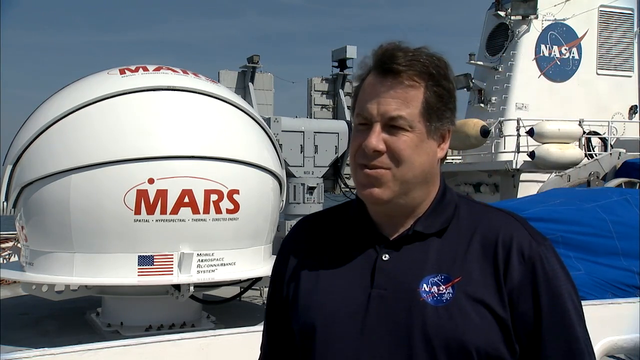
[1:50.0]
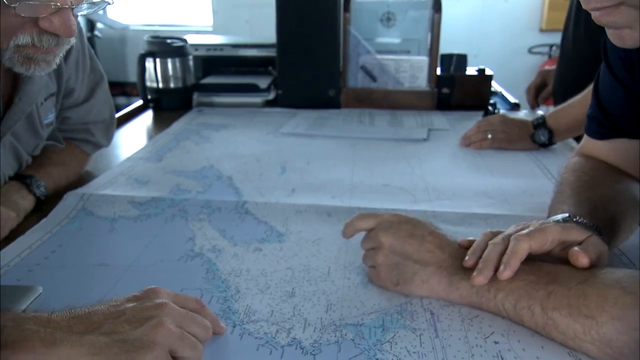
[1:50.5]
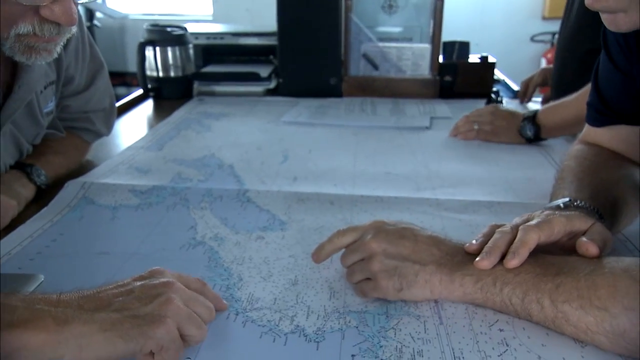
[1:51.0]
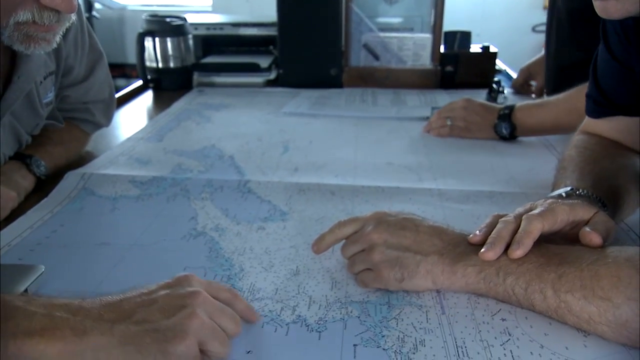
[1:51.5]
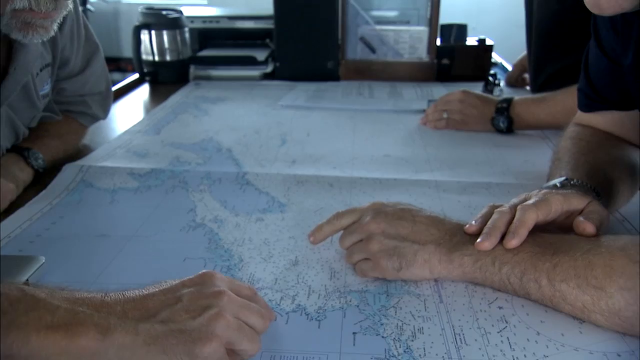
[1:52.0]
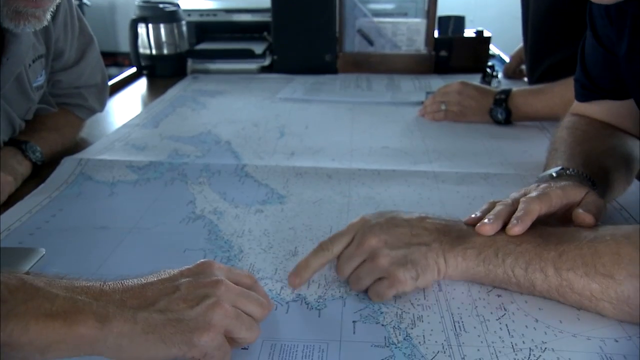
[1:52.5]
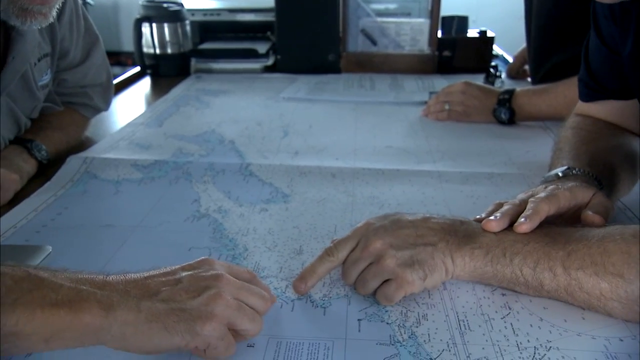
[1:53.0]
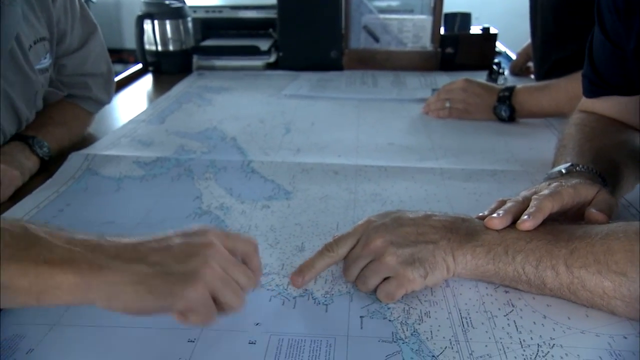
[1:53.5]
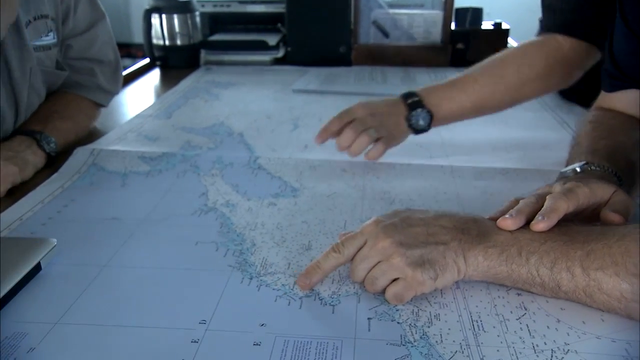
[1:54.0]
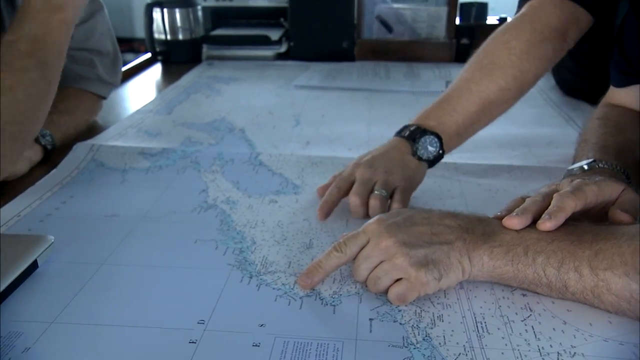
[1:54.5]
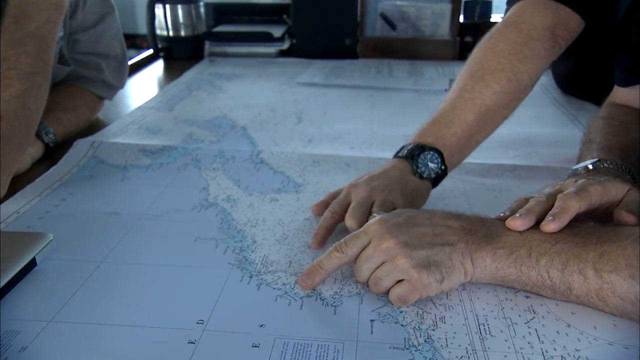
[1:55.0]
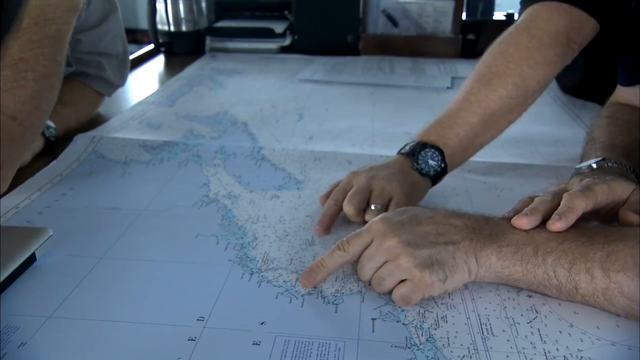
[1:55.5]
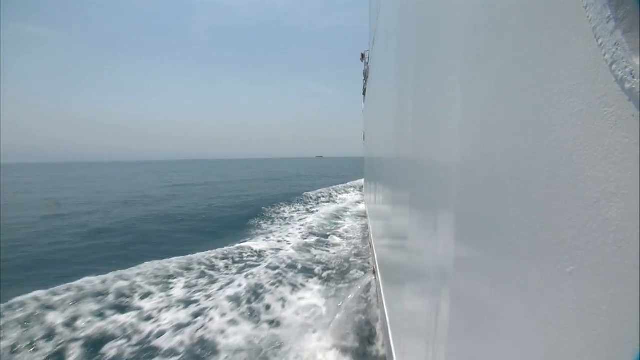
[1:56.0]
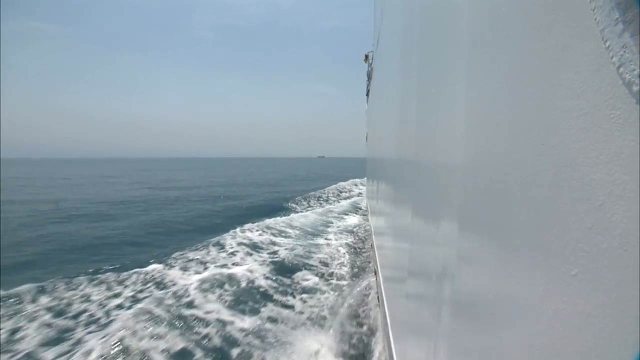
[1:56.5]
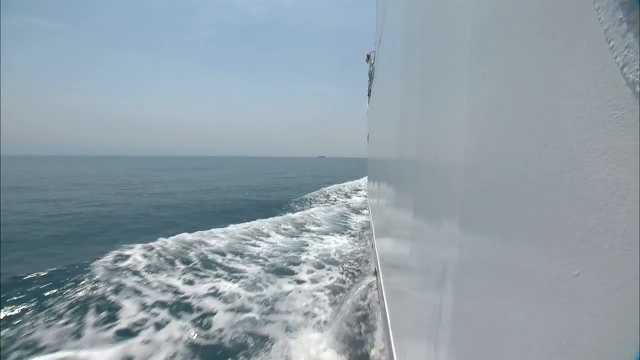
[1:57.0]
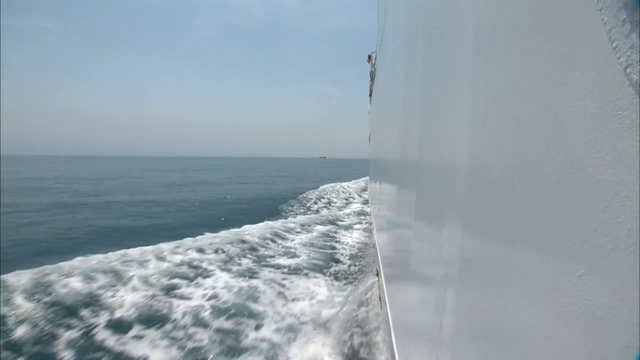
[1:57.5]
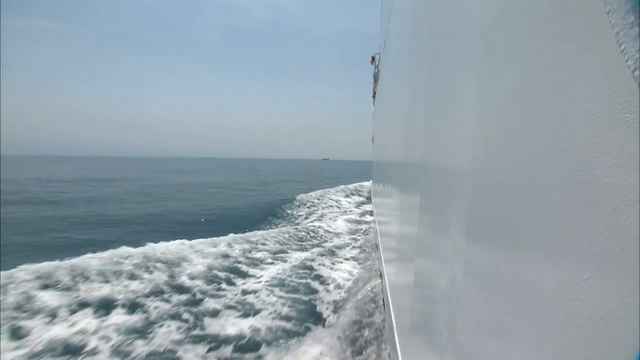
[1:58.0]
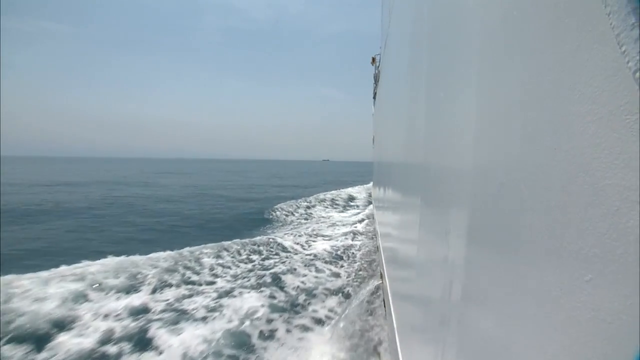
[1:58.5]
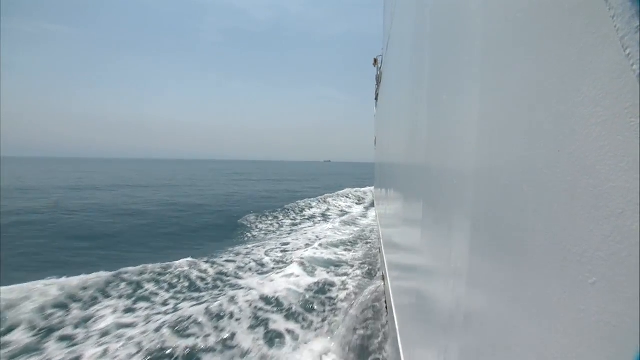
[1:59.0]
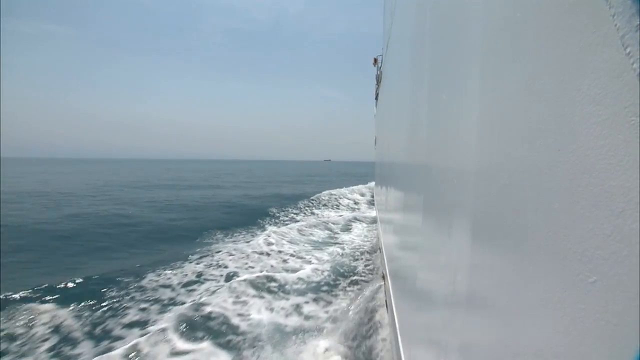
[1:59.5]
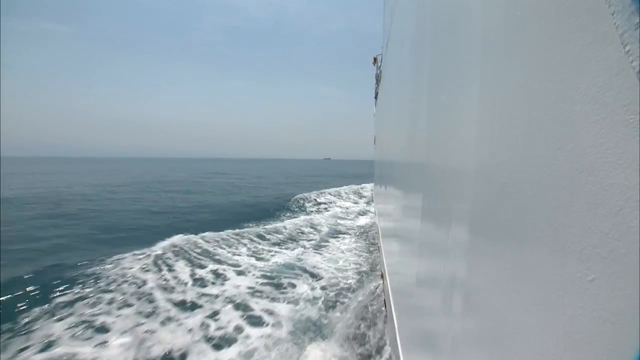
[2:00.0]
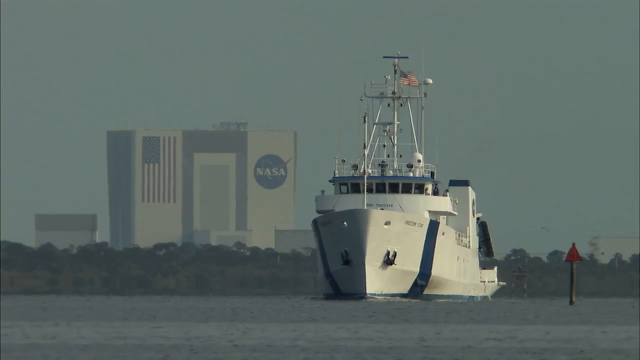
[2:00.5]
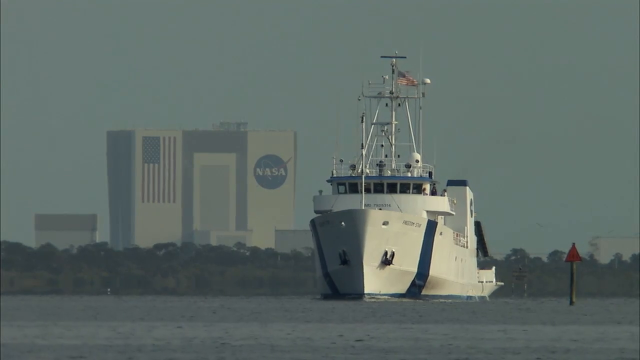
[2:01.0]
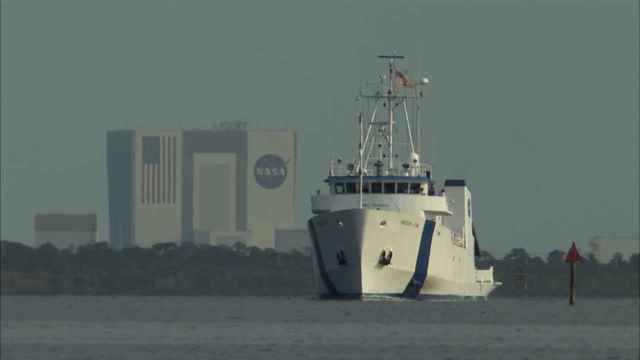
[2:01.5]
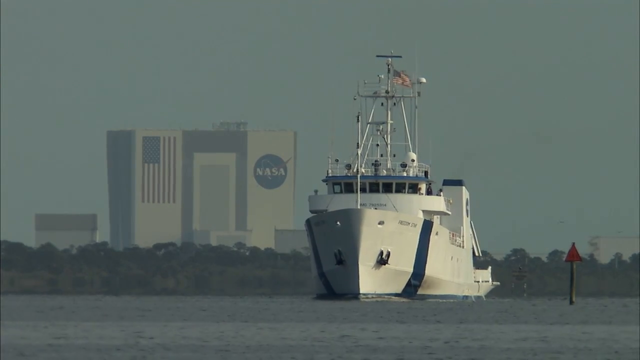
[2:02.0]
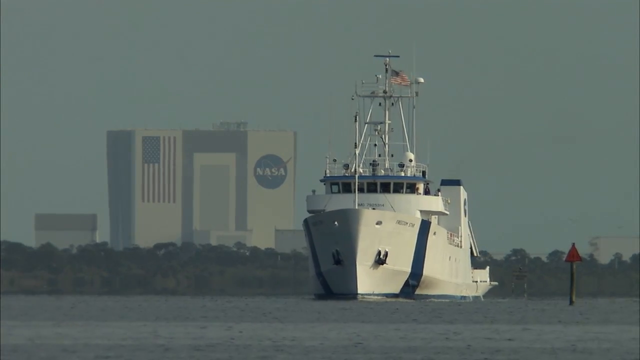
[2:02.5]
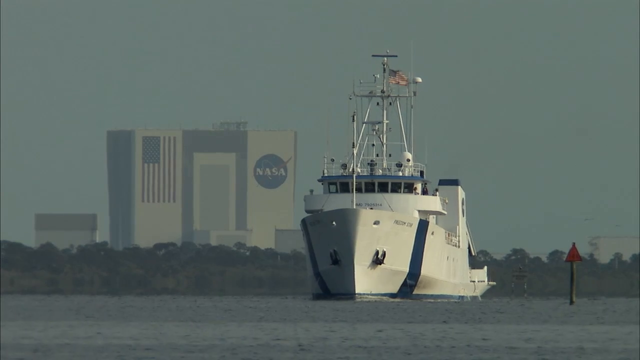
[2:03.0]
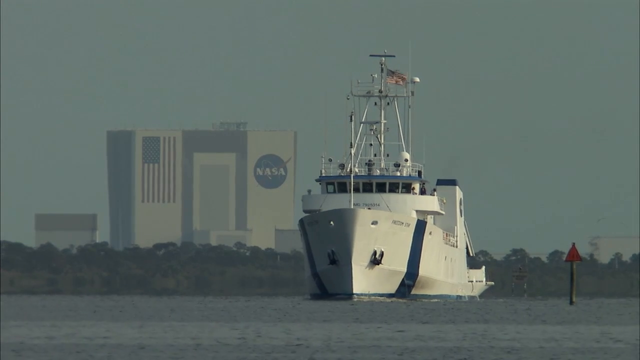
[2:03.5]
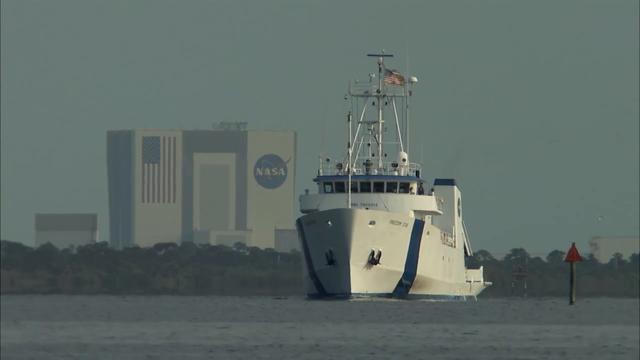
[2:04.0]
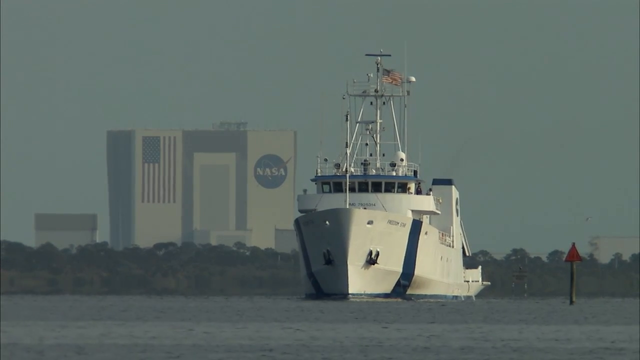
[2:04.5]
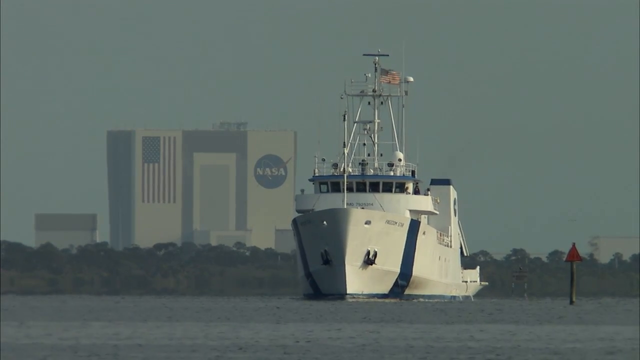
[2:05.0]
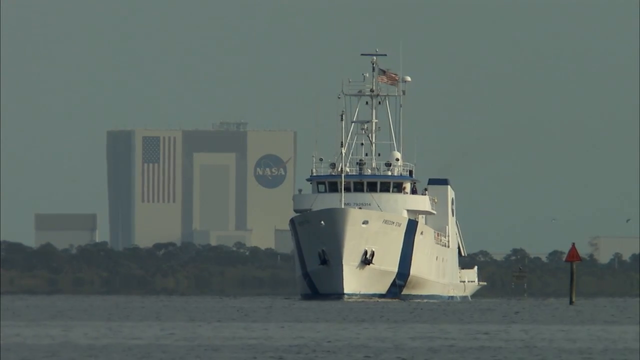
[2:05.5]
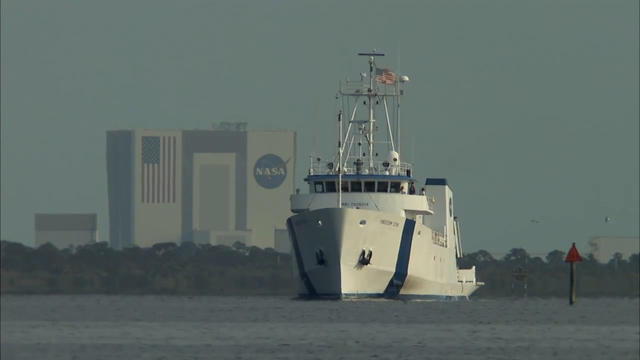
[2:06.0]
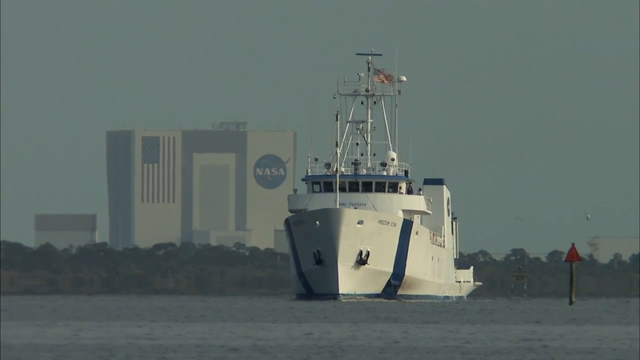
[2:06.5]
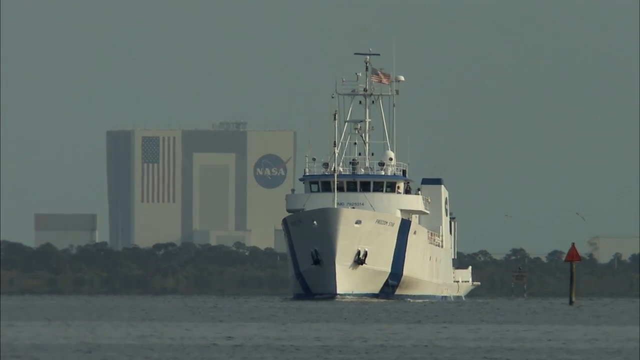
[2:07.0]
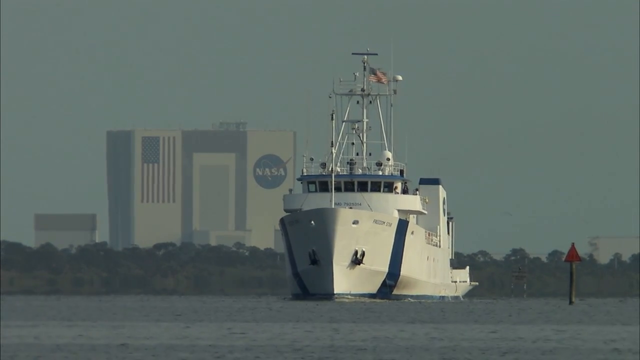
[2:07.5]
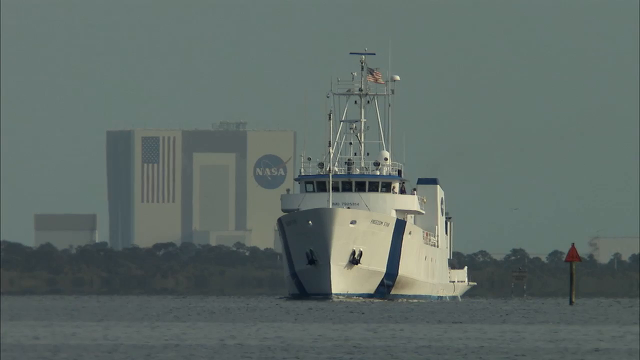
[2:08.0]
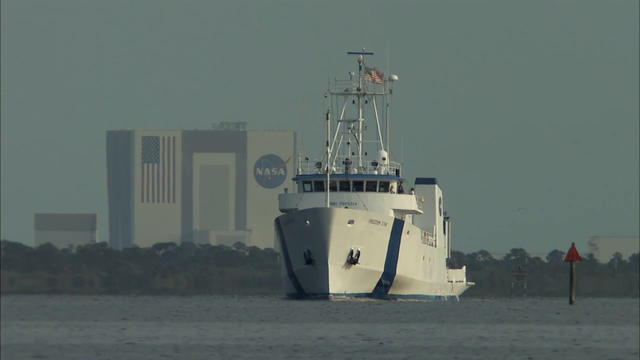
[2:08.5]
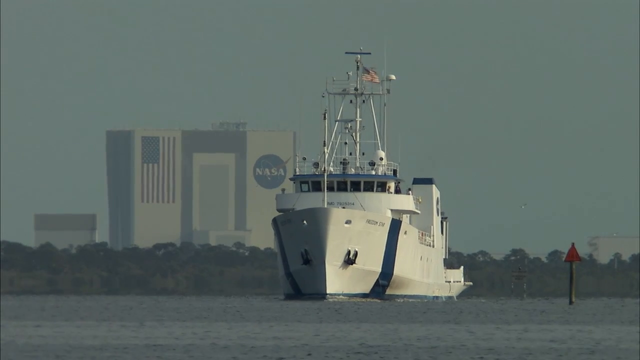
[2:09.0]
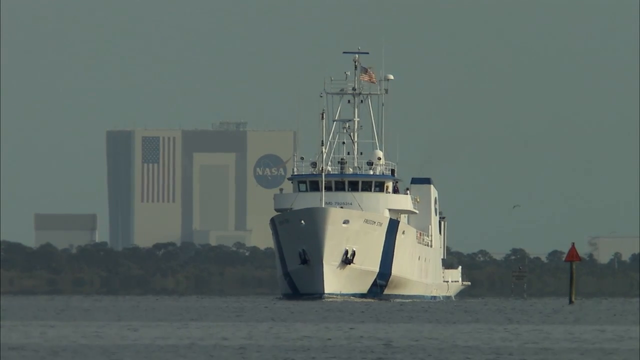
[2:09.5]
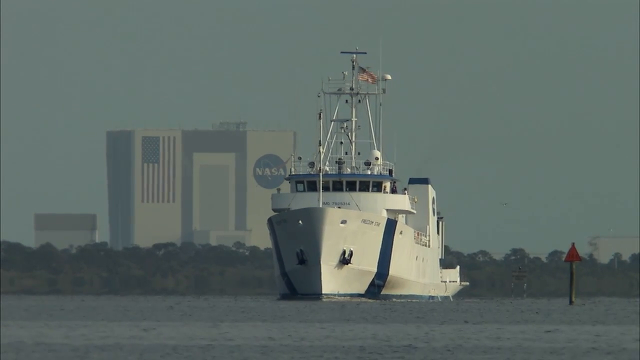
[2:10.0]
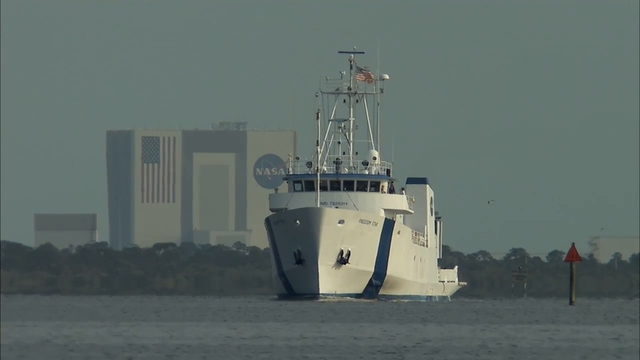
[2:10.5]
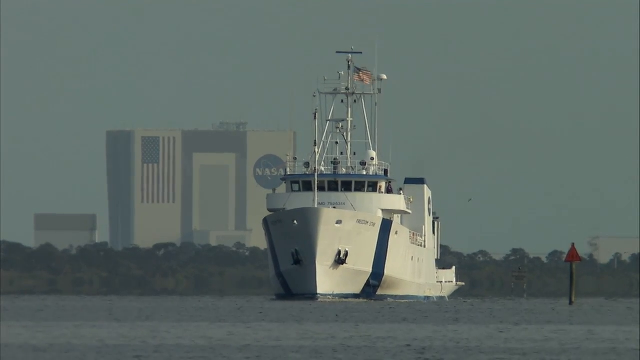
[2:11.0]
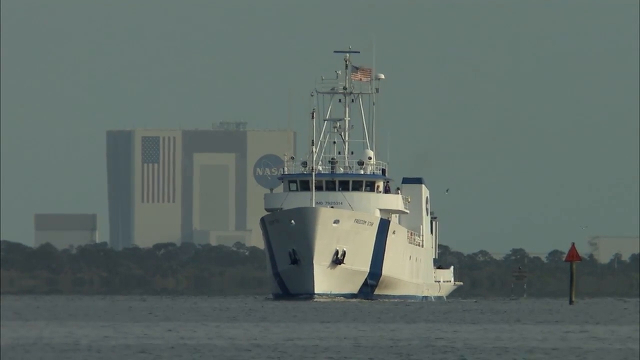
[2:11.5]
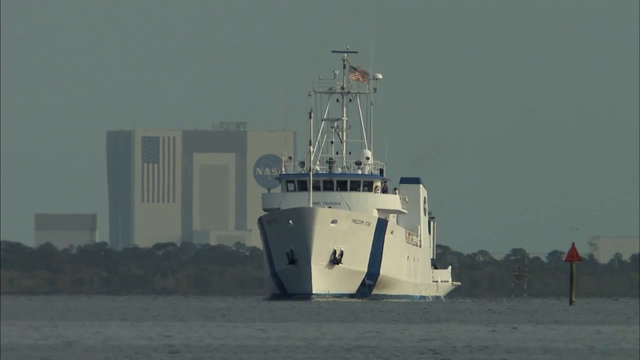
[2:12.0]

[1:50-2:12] Hands point to a map laid down flat; there appear to be three or four sets of hands, with black watches on the wrists, pointing to different things. A view of the side of the ship close to the water shows white foam coming off the water as the ship cuts through it. Then a front view shows a ship, apparently the same one, coming towards the camera, slightly angled to the left. In the background is a large NASA building with an American flag hung down on one side and the NASA logo on the right, along with a shadowed tree line. The sky is kind of gray-blue, an overcast day. The building has very faded colors and no sharp outline, and the trees are also a little blurry and green. The white ship has a blue stripe, a small American flag hanging at the very top of its tower, and a bank of windows in an elevated part of the boat where the captain is.